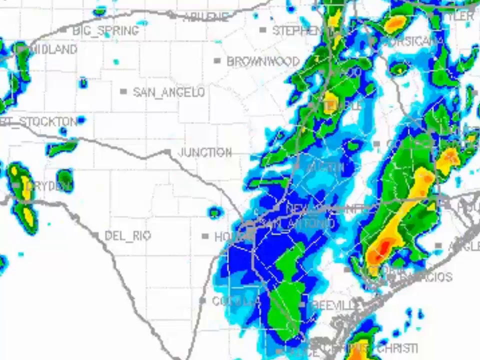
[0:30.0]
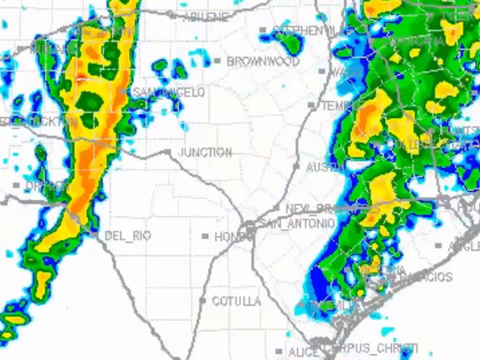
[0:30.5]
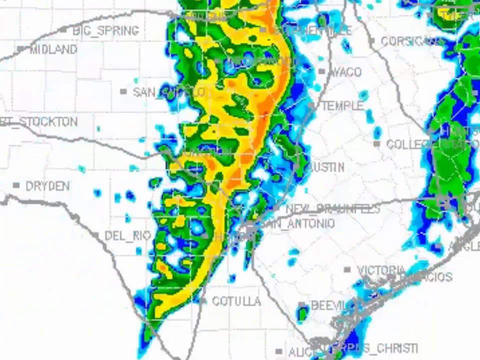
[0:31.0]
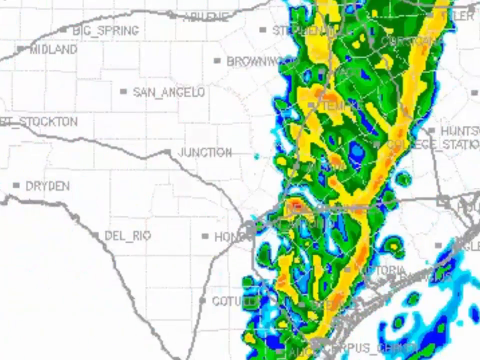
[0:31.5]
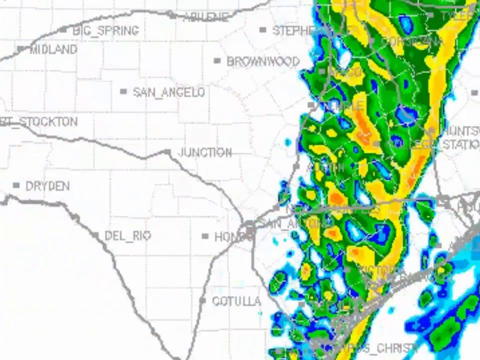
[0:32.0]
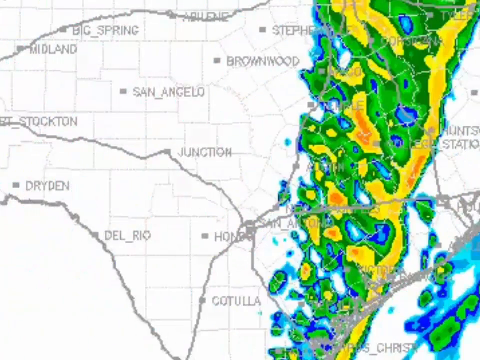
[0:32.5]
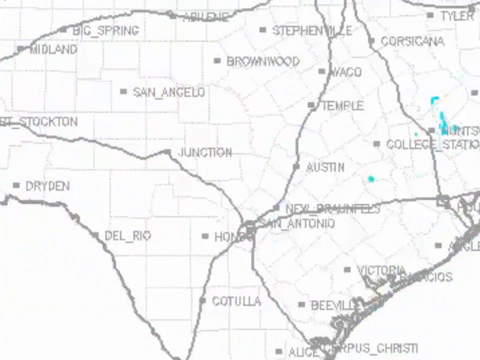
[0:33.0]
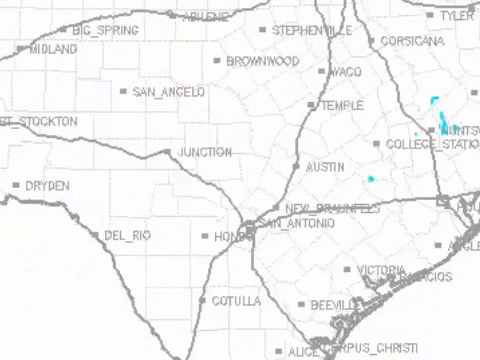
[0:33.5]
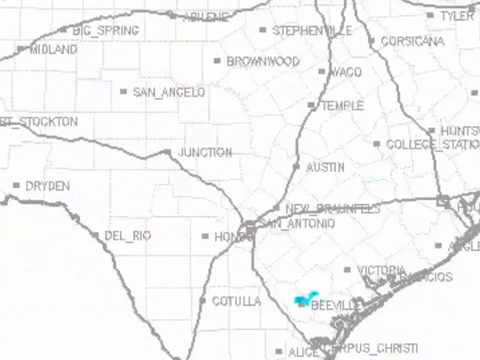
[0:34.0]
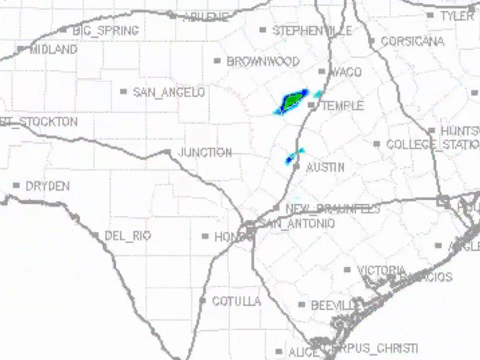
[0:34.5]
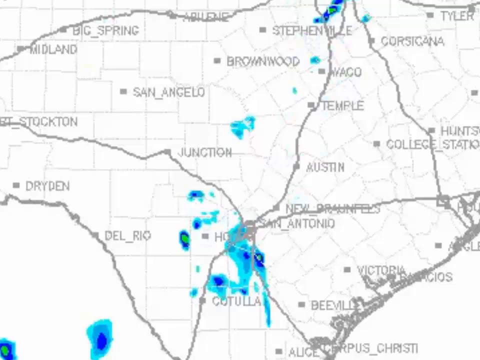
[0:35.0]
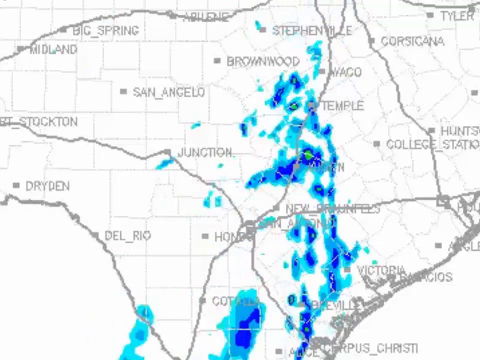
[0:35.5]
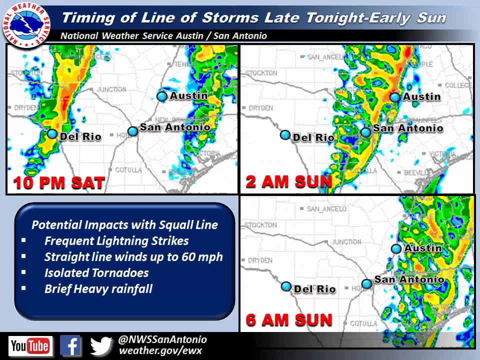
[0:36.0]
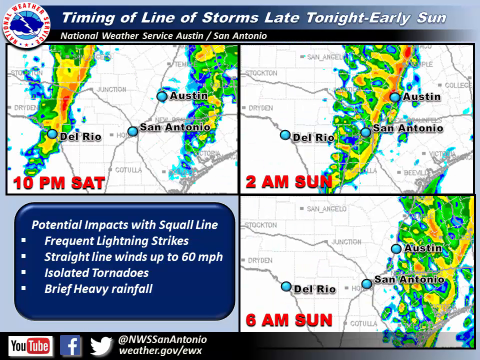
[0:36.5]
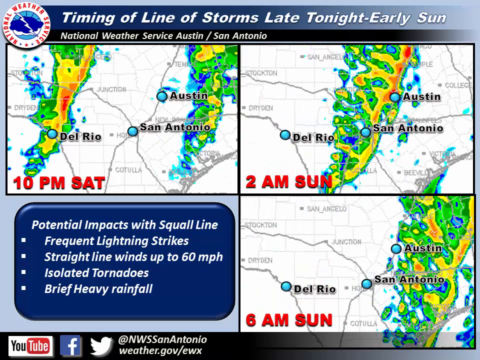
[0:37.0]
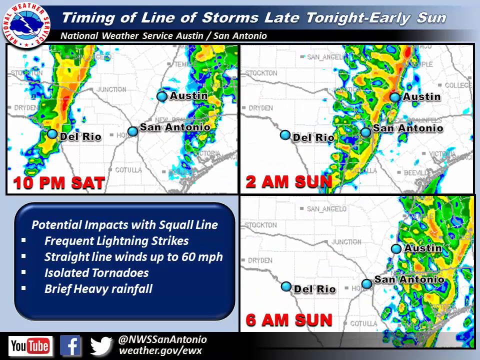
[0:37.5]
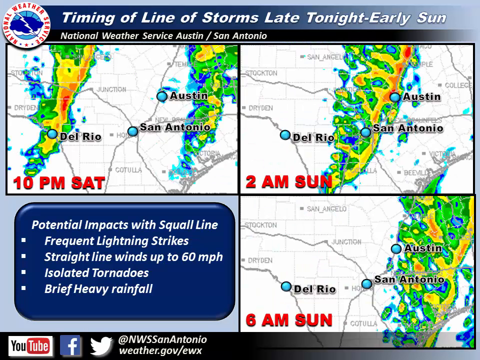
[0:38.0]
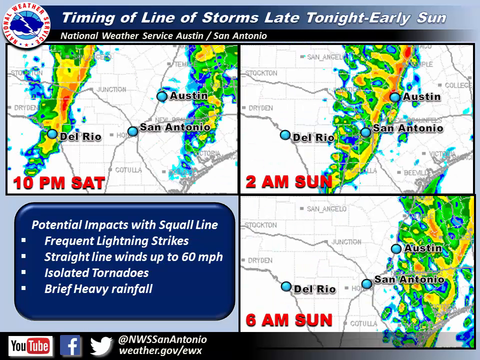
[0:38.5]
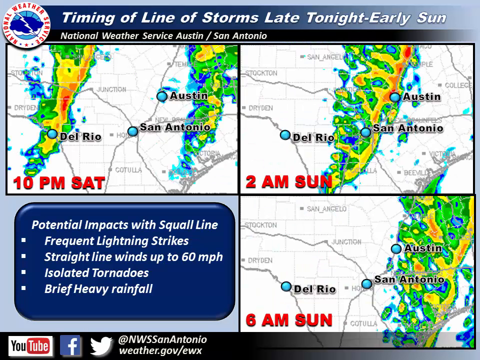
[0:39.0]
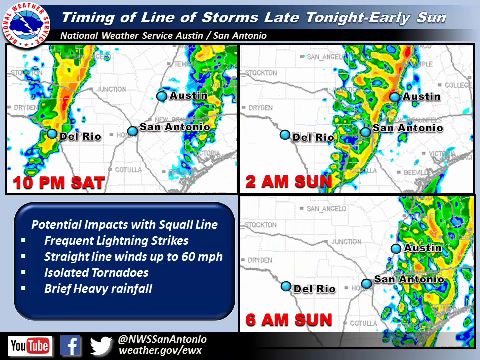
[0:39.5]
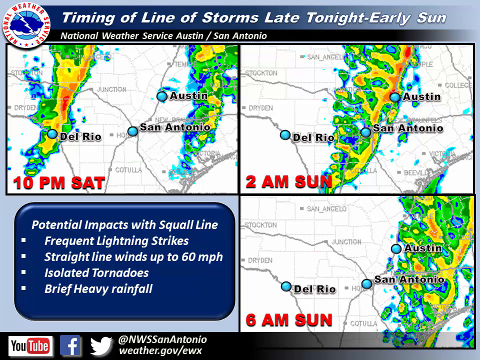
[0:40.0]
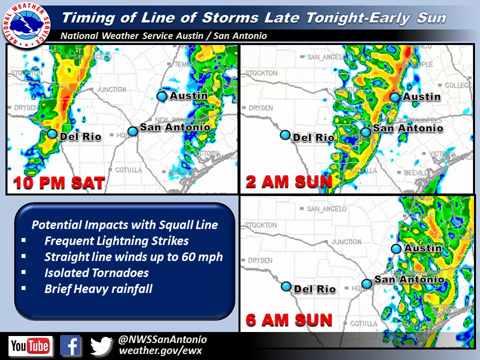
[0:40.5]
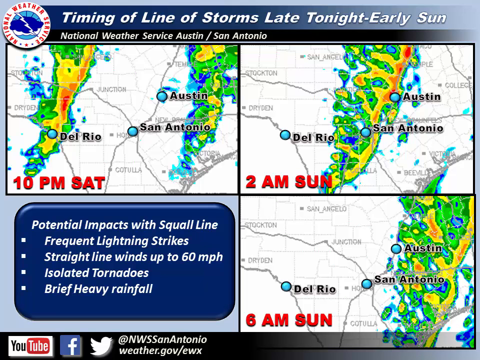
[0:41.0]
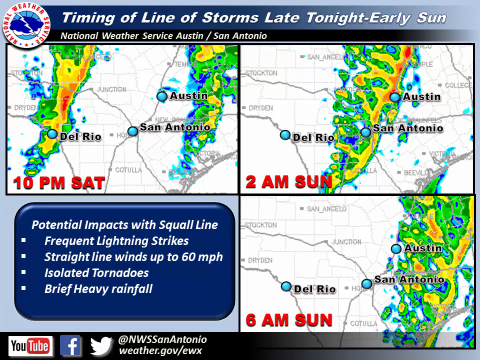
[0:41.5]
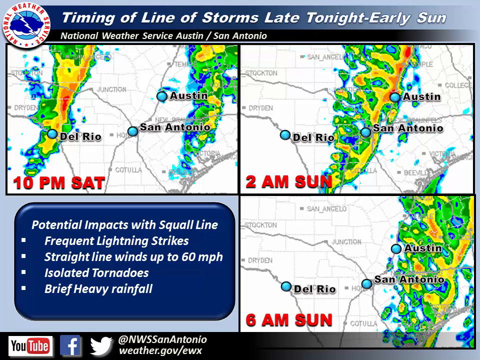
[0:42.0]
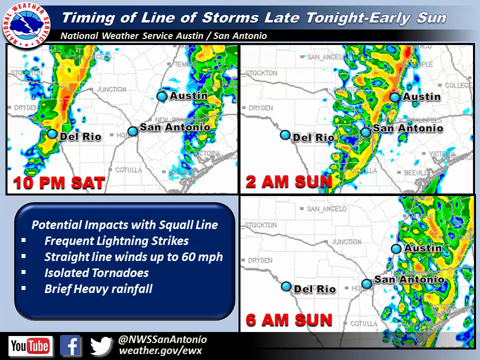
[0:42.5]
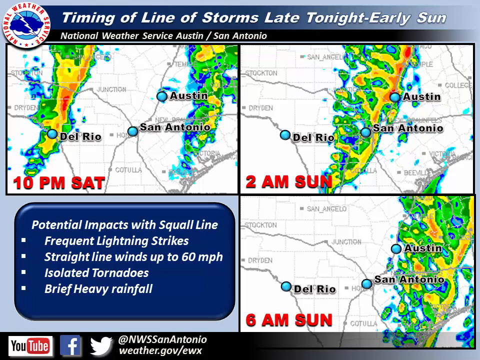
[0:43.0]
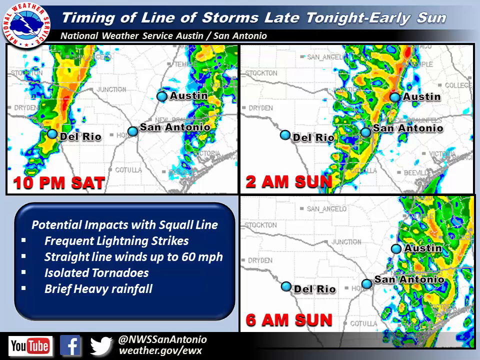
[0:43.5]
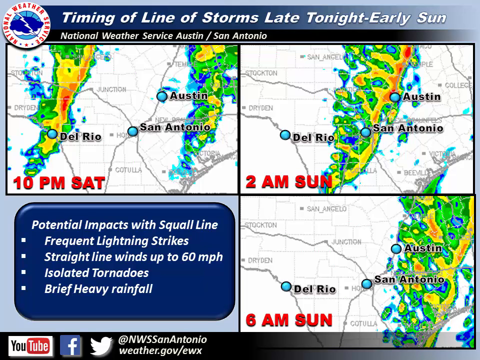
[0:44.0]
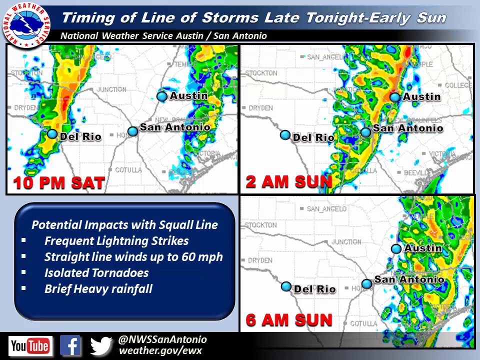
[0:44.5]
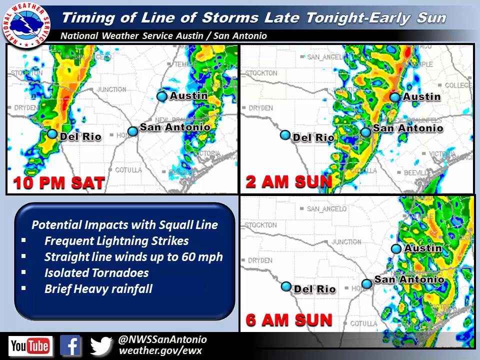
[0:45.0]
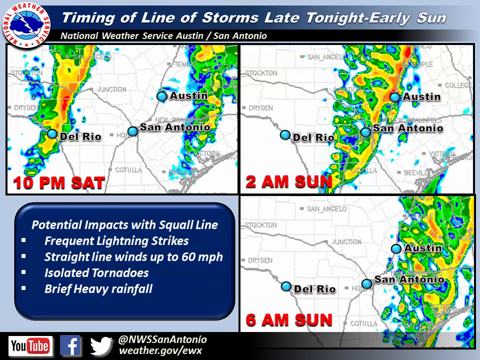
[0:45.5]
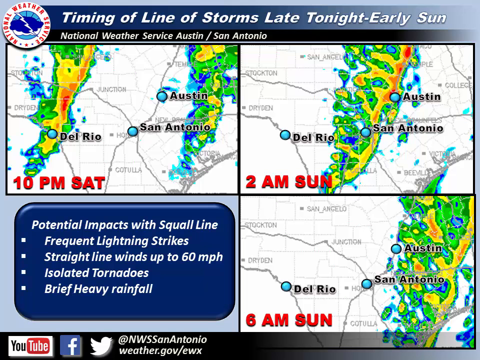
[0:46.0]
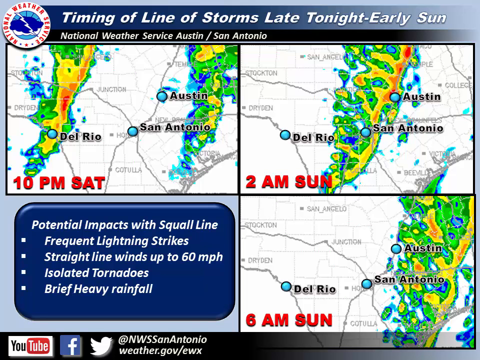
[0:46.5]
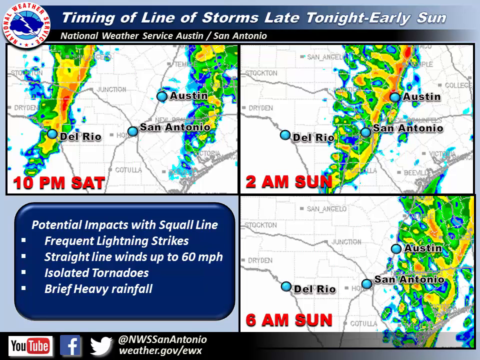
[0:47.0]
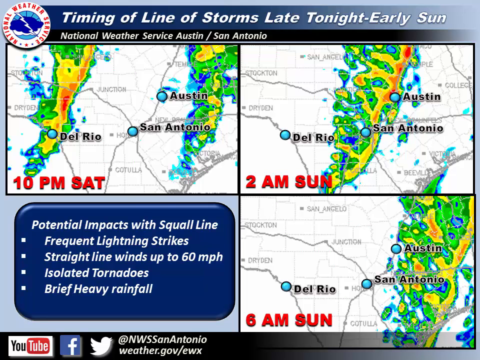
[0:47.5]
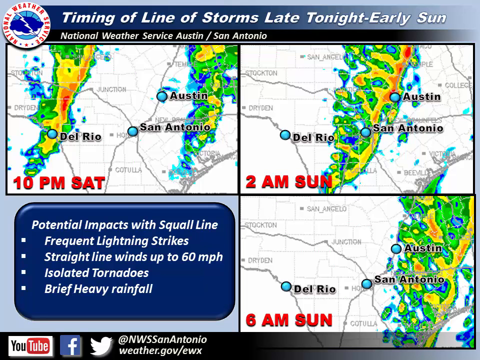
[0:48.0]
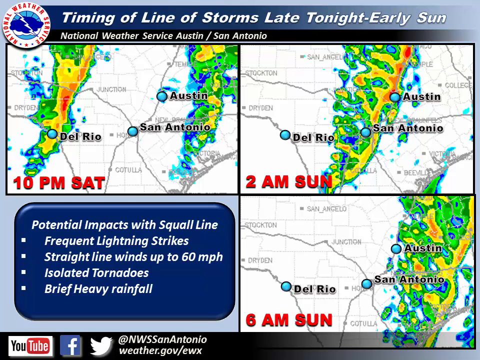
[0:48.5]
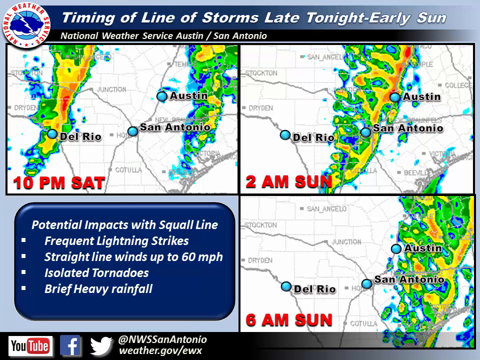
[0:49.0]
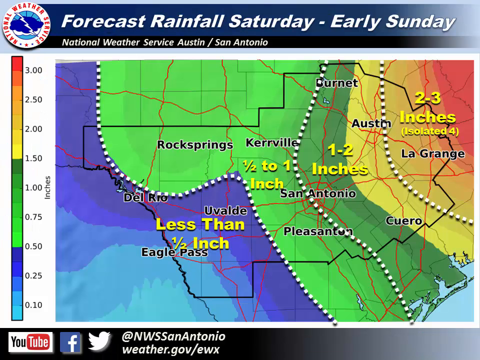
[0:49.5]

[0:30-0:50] The zoomed-out map remains, with random shapes and colors moving in front of it and places visible on it. A topic reads "timing of line of storm late tonight, early Sunday", from the National Weather Service Austin/San Antonio. The screen is divided into four grids. The upper left grid shows "10 PM Saturday", with Del Rio, San Antonio and Austin marked with blue dots and the random shapes and colors over some areas of the map. The upper right grid shows "2 AM Sunday" with the same places, Del Rio, Austin and San Antonio. The bottom right grid reads "6 AM Sunday" with the same places written. The bottom left grid shows "potential impacts with squall line": "frequent lightning strikes", "straight line winds up to 60 MPH", "isolated tornadoes" and "brief heavy rainfall". The page is still on YouTube, with a Twitter account shown at the bottom.